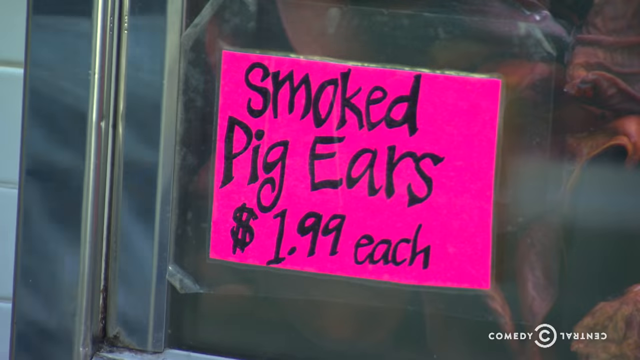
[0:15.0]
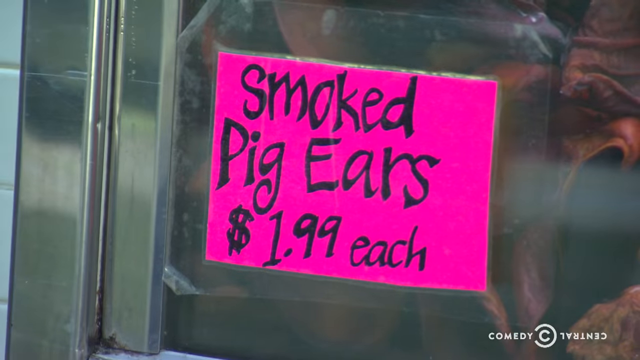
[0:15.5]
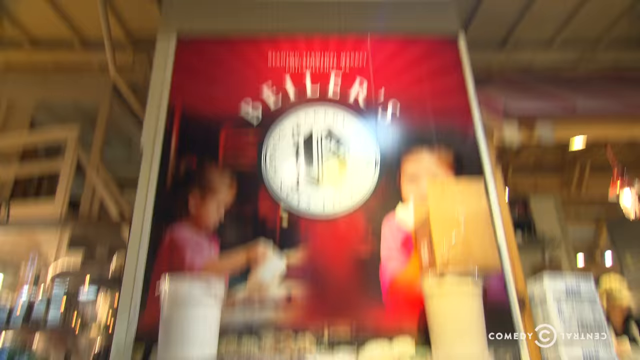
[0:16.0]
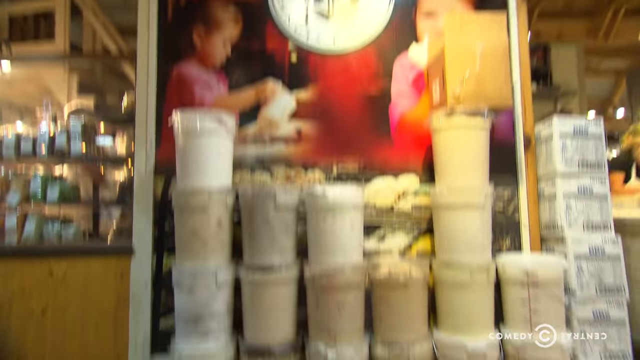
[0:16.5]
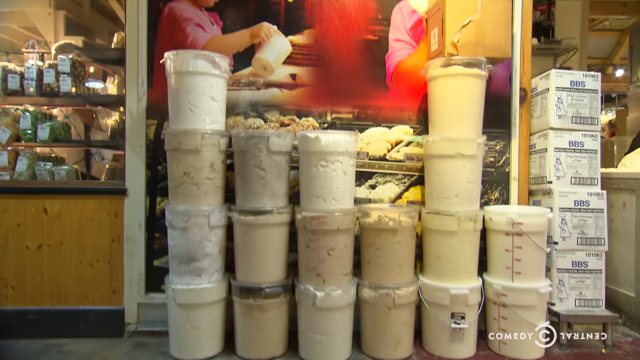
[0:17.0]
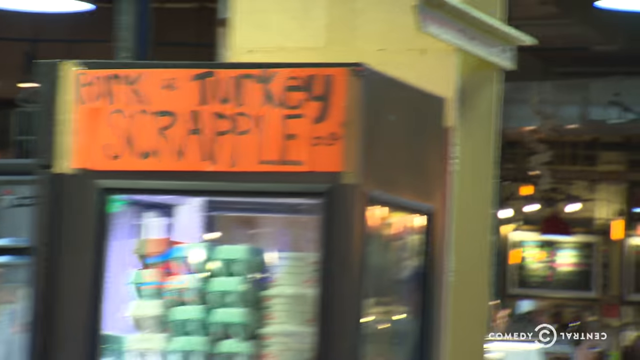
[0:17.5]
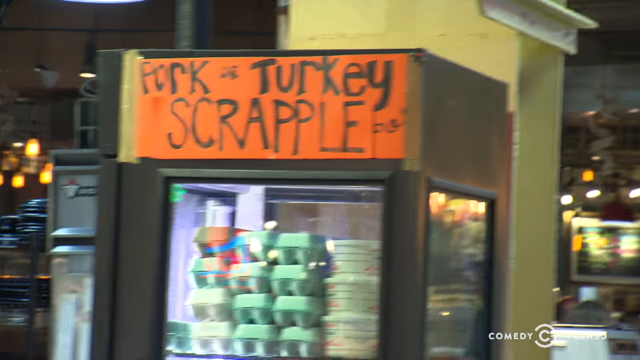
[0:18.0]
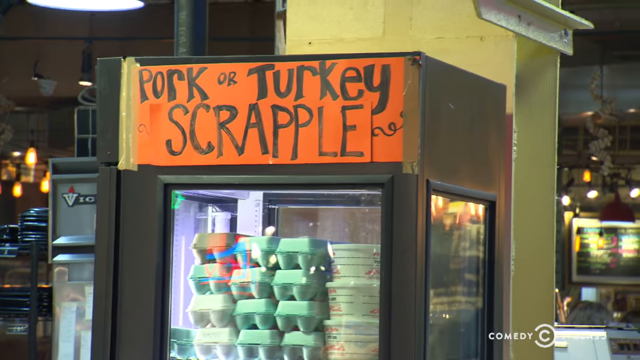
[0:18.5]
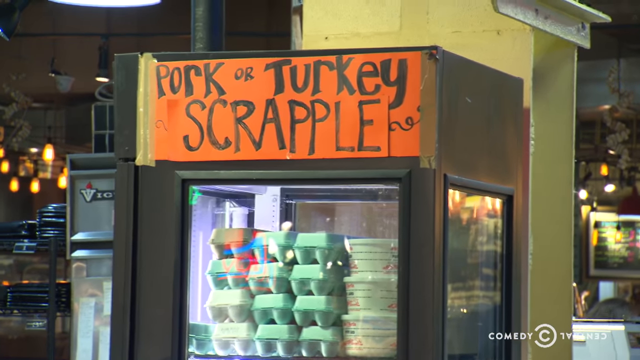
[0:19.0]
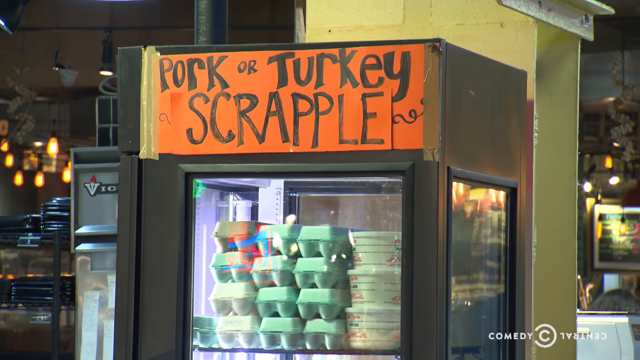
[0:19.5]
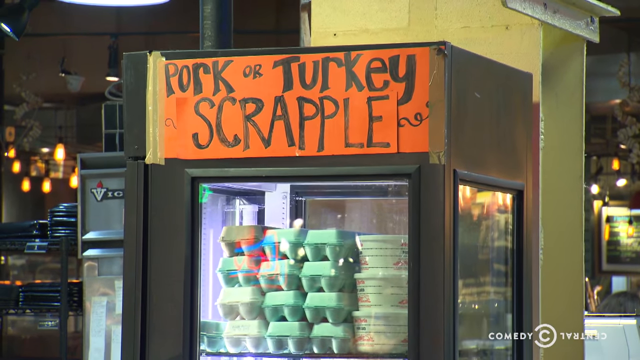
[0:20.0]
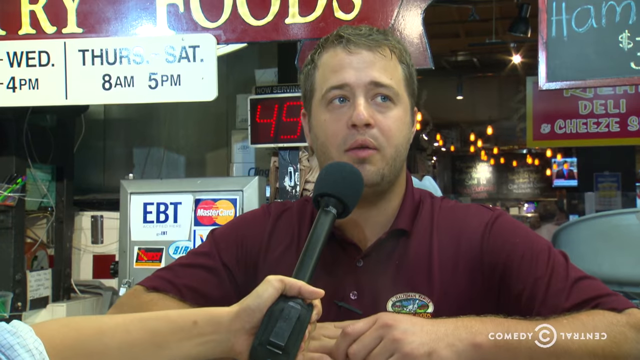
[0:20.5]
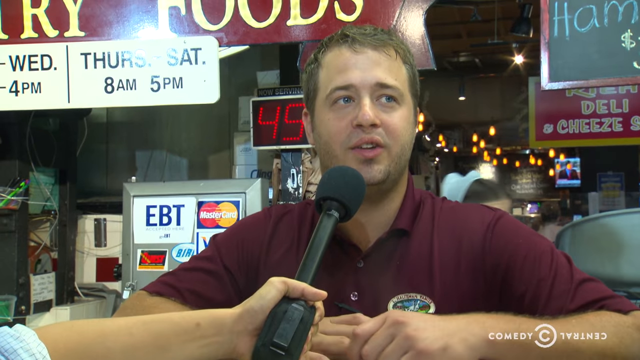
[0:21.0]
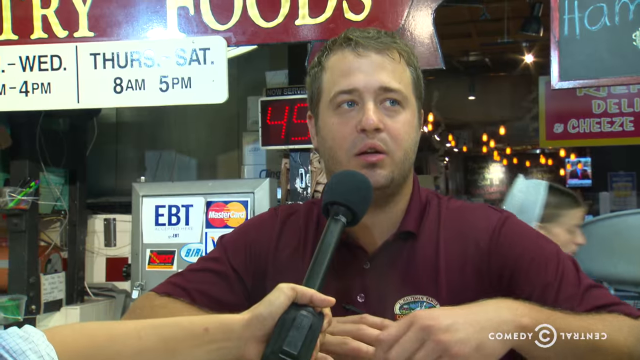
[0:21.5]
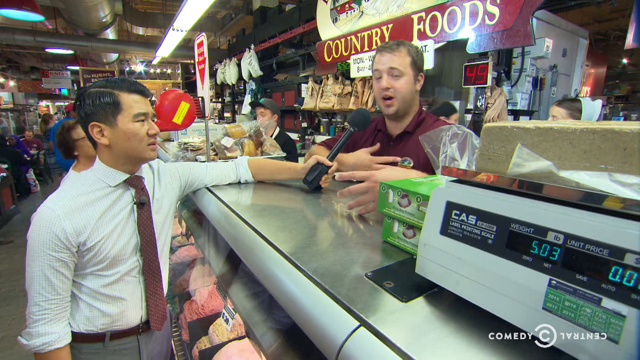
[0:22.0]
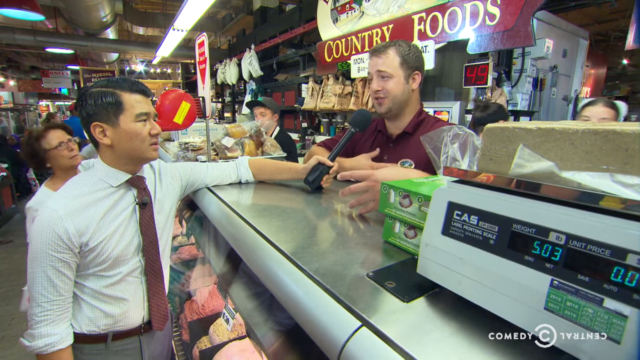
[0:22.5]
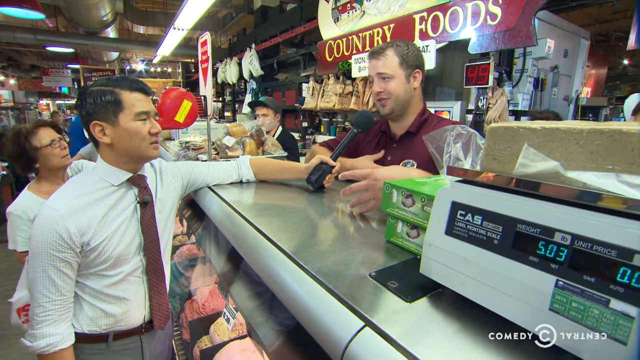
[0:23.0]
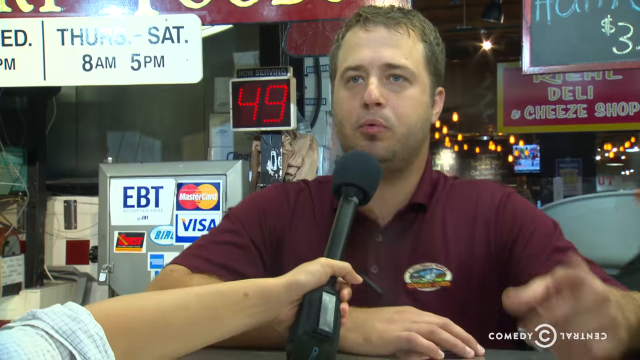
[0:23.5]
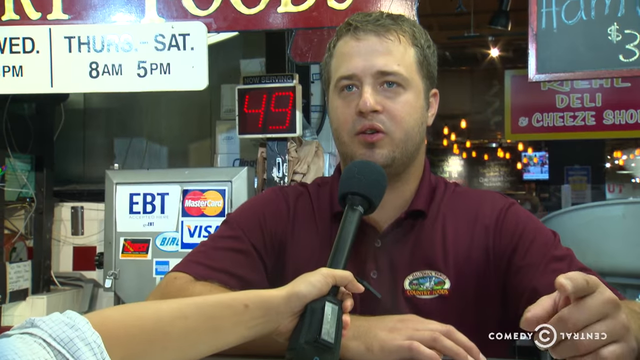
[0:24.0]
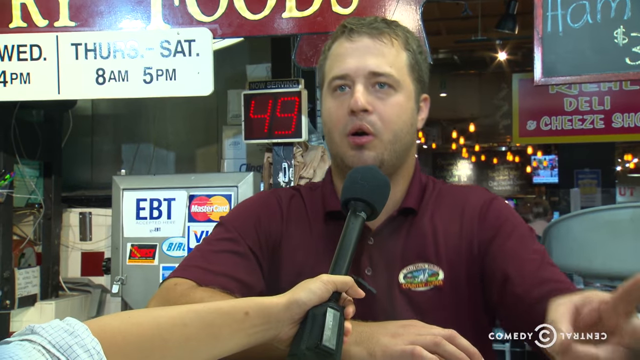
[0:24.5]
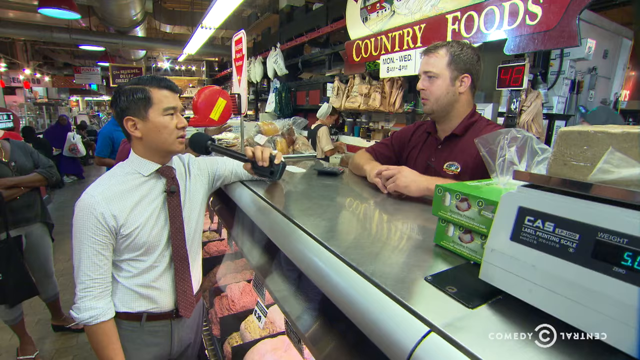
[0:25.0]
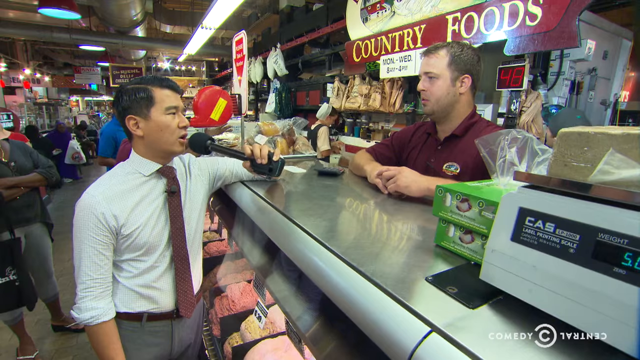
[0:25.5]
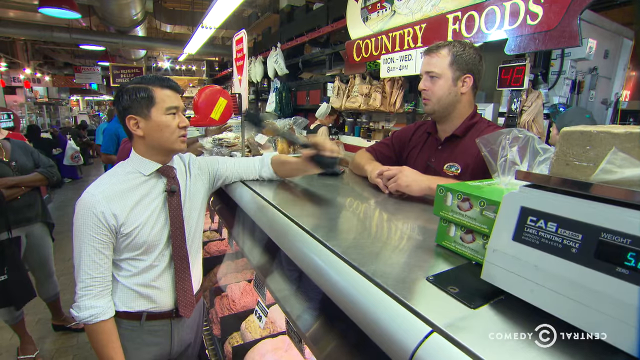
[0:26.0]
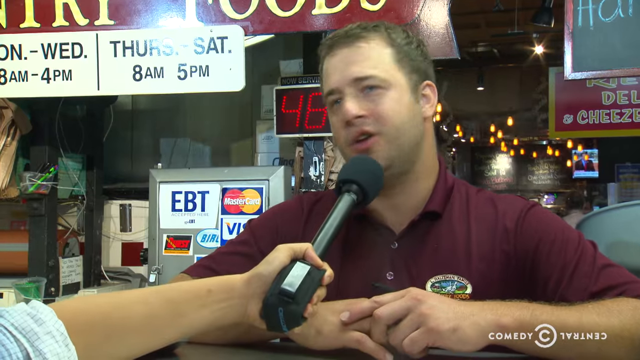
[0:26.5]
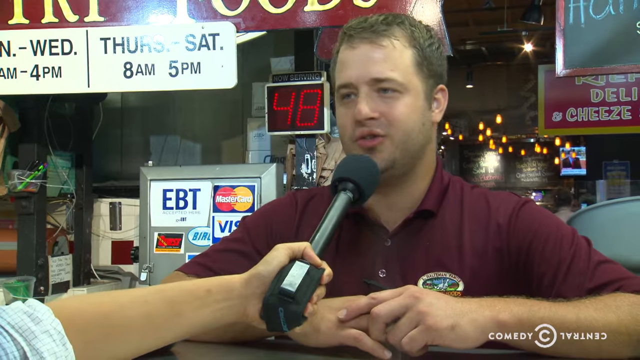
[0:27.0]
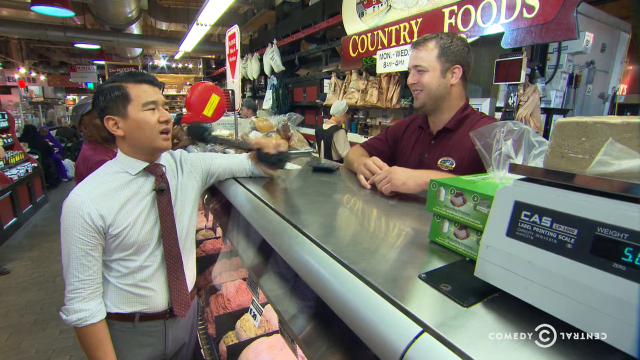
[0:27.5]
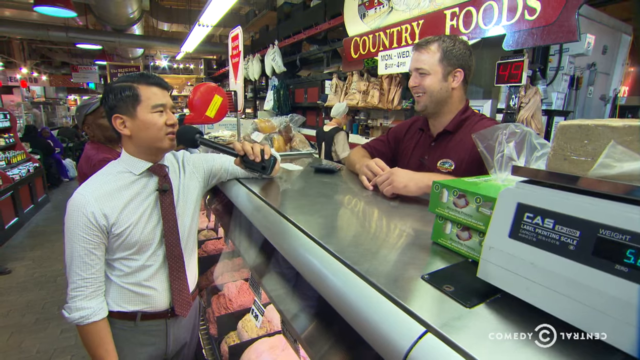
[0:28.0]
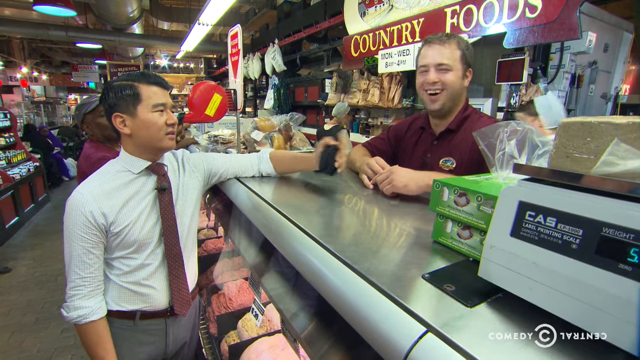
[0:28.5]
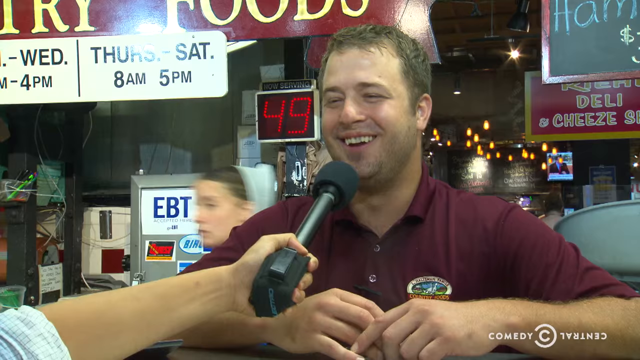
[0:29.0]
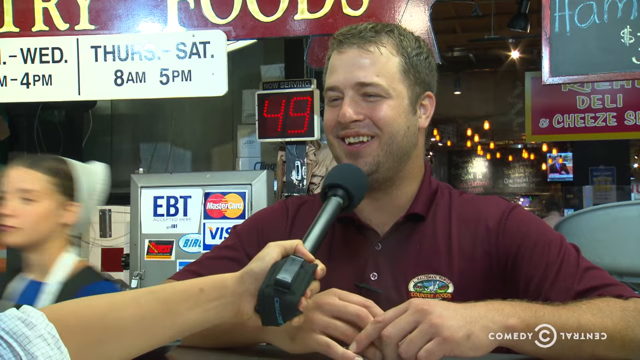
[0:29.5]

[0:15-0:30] The reporter, an Asian man in his late 20s or early 30s, wears a white patterned long-sleeved dress shirt, gray pants and a brown belt. He is in a place called Reading Terminal Market and walks through a dining hall. He talks to a blonde white man in a maroon polo shirt behind a deli counter, who speaks into the microphone the reporter is holding; they appear to be having an animated discussion. The camera cuts to foodstuffs: one label says "smoked pig ears," and a cooler says "pork or turkey scrapple." The deli counter has meats in its refrigerated area. The market is bustling with people, and behind the reporter an elderly lady is buying some meat.